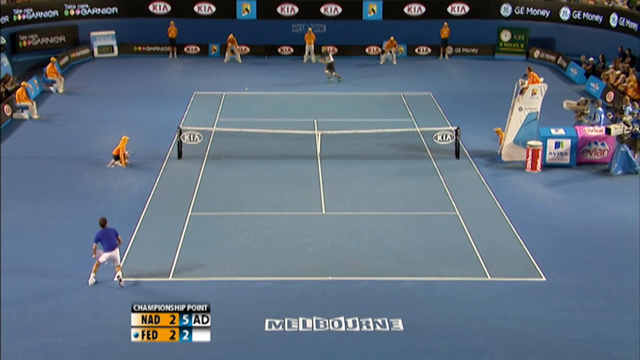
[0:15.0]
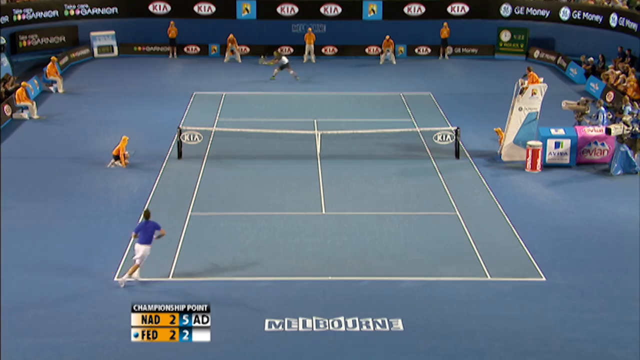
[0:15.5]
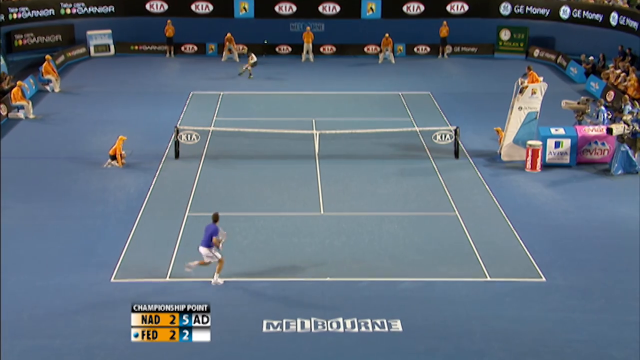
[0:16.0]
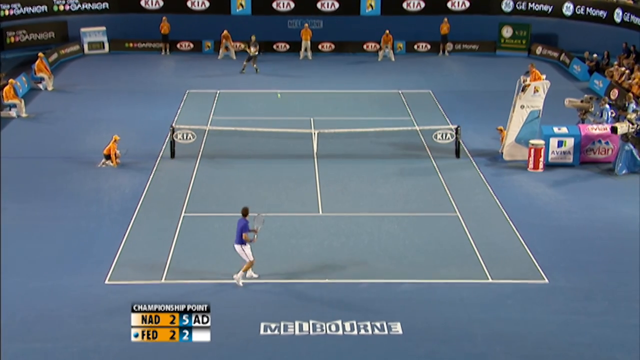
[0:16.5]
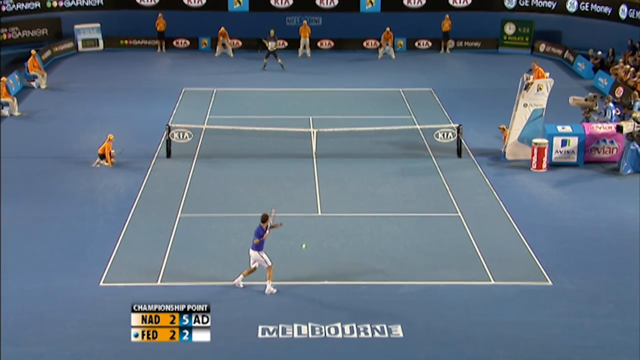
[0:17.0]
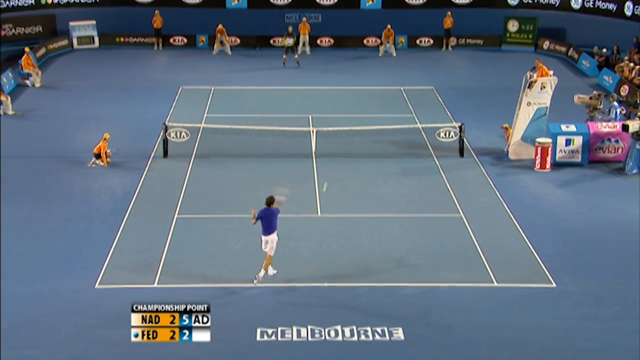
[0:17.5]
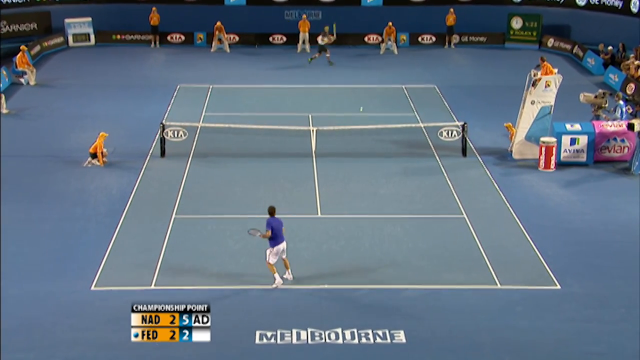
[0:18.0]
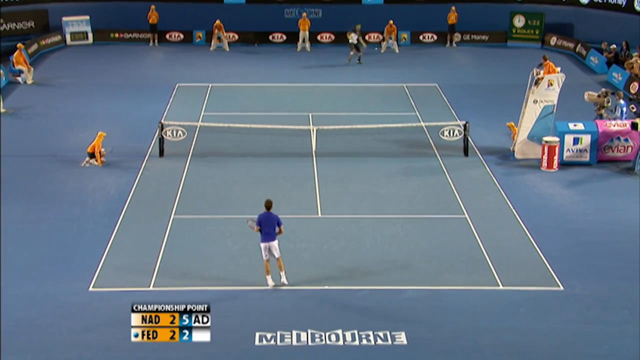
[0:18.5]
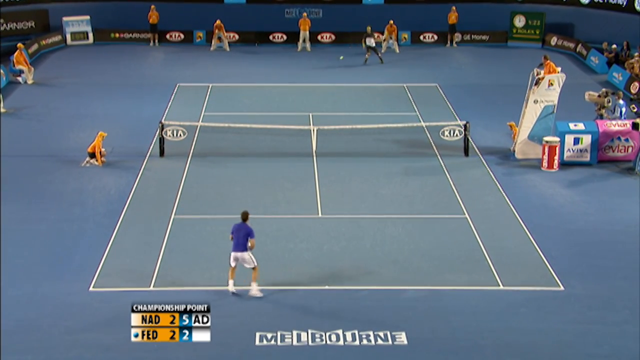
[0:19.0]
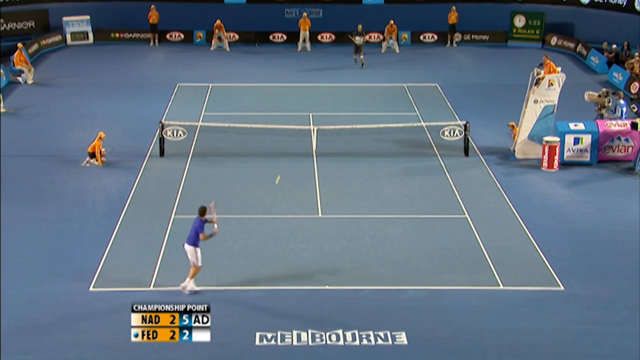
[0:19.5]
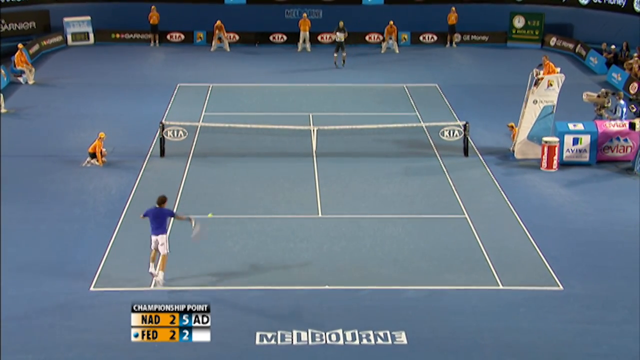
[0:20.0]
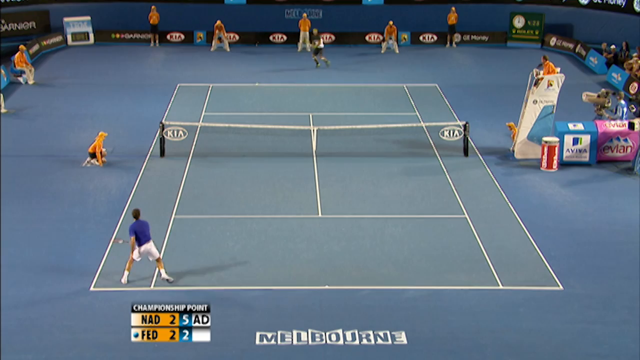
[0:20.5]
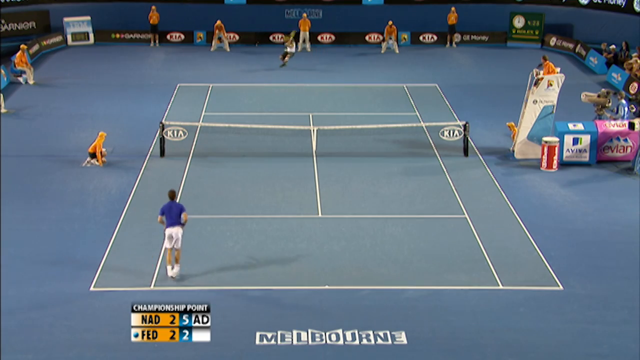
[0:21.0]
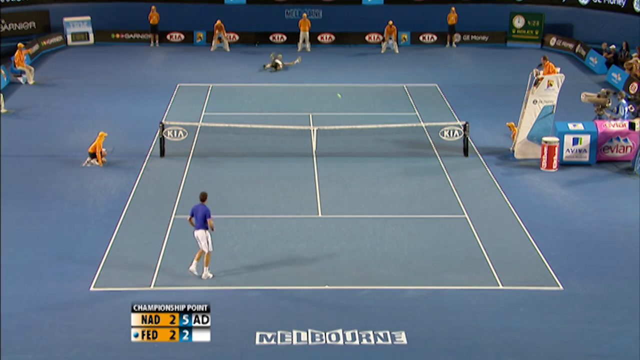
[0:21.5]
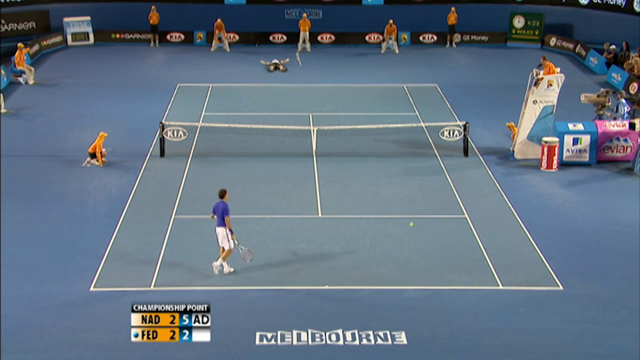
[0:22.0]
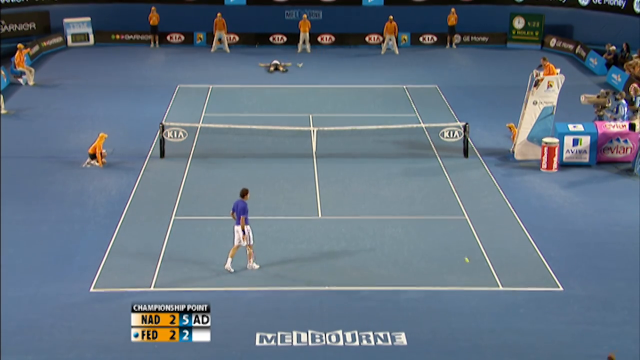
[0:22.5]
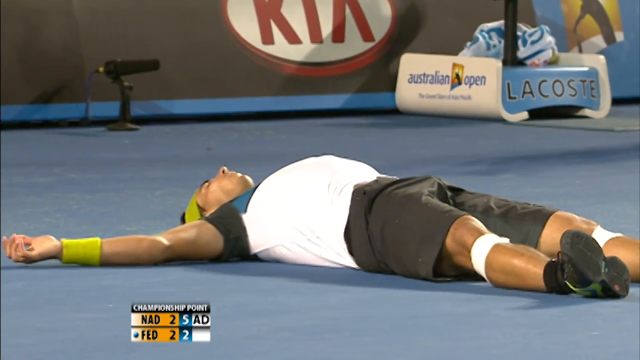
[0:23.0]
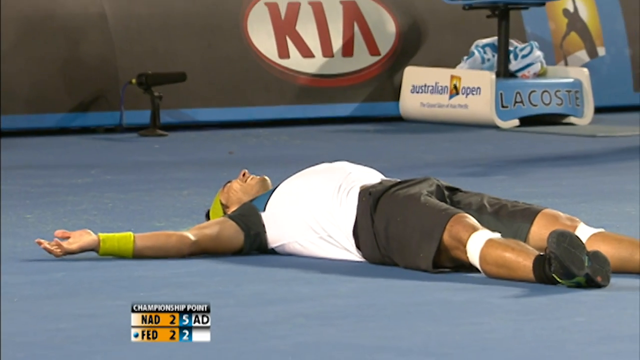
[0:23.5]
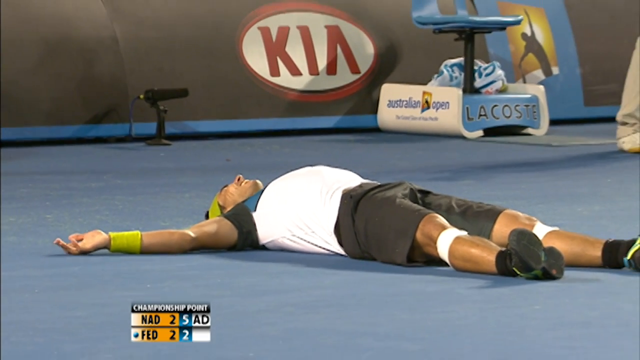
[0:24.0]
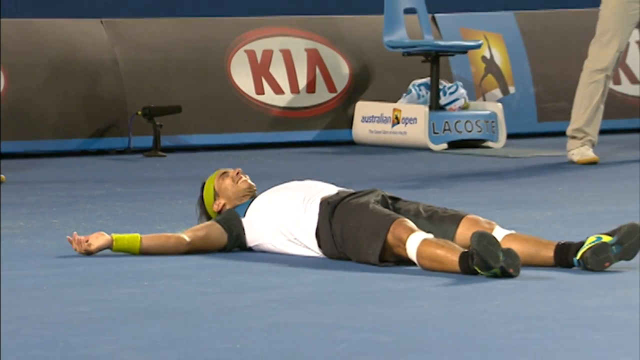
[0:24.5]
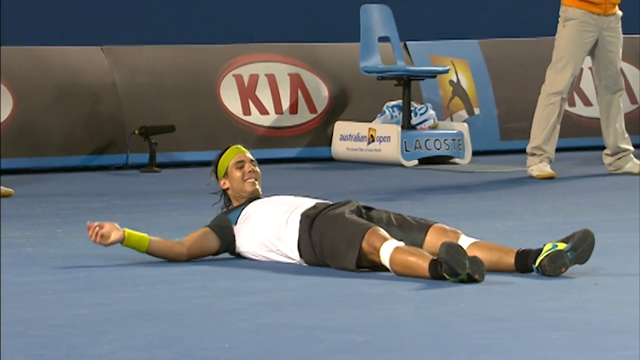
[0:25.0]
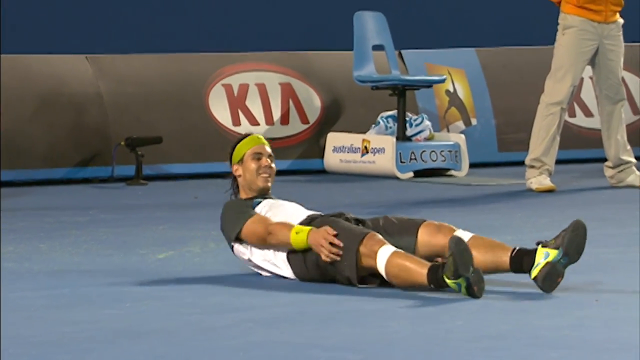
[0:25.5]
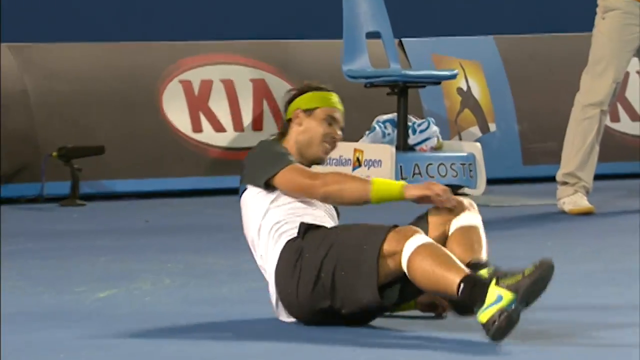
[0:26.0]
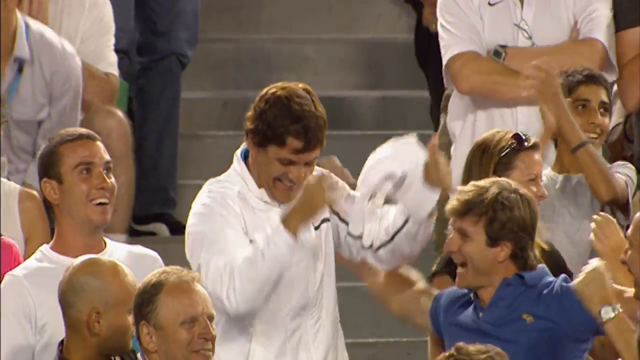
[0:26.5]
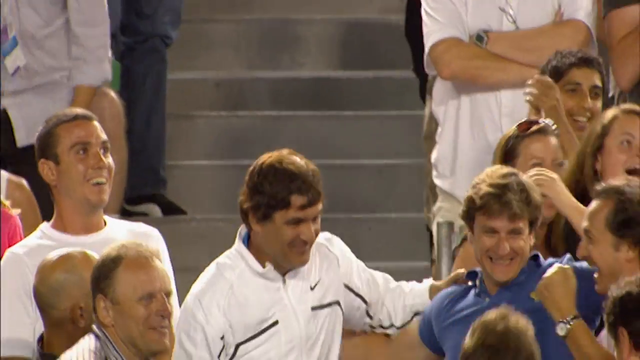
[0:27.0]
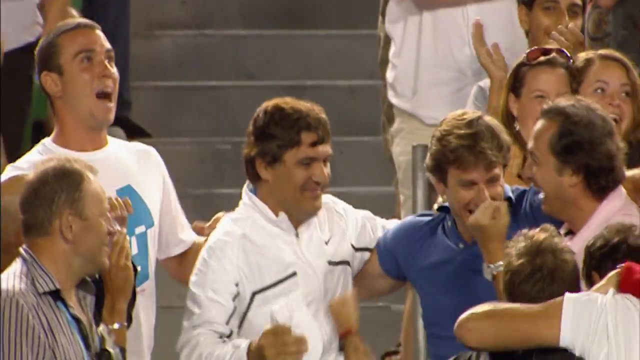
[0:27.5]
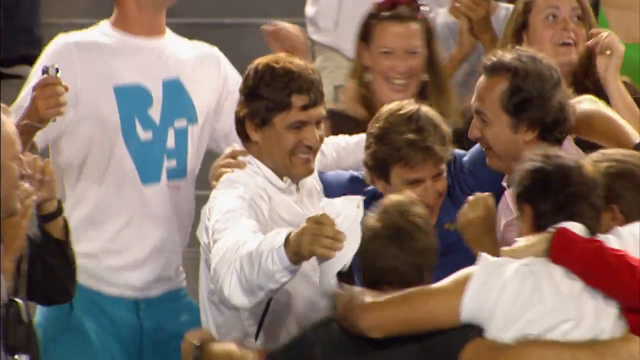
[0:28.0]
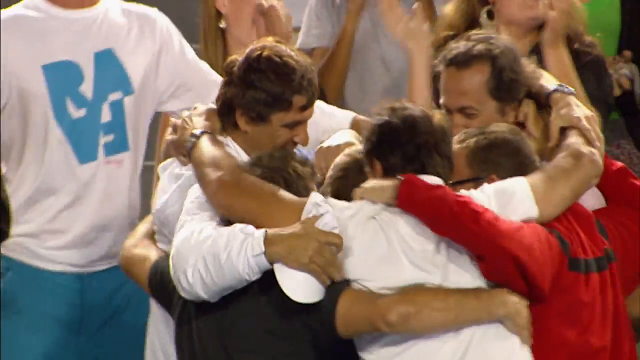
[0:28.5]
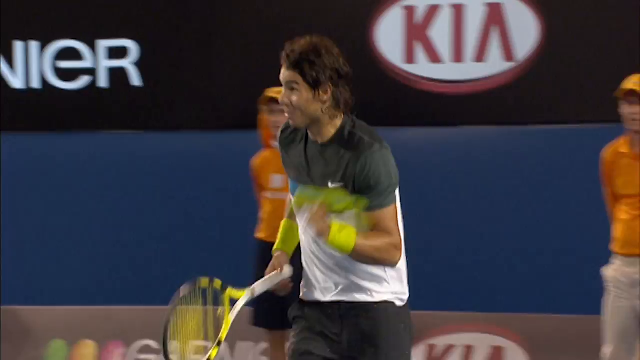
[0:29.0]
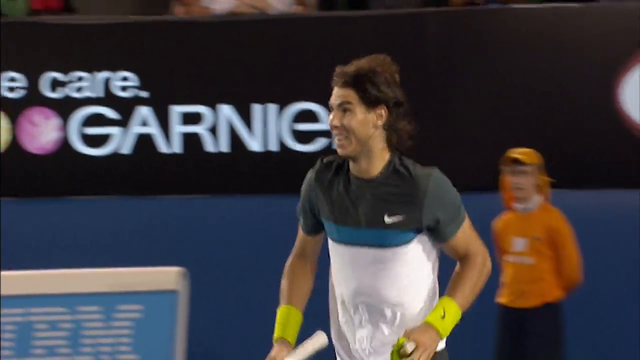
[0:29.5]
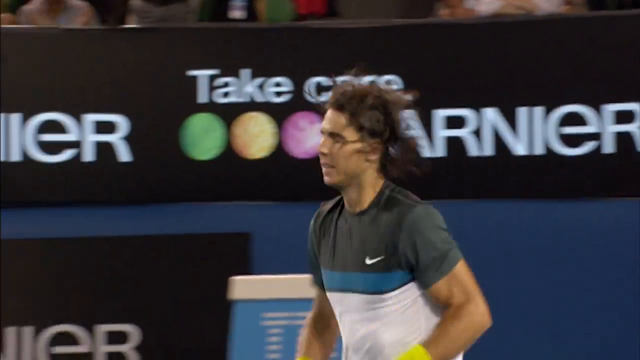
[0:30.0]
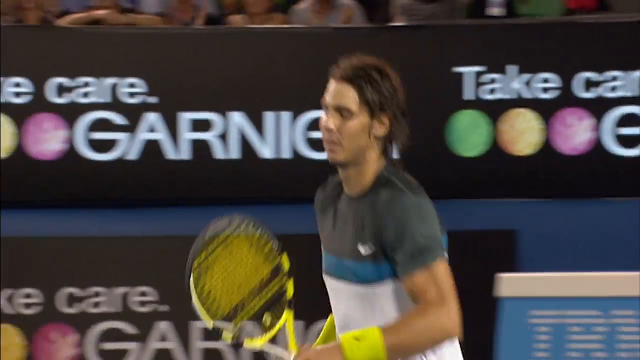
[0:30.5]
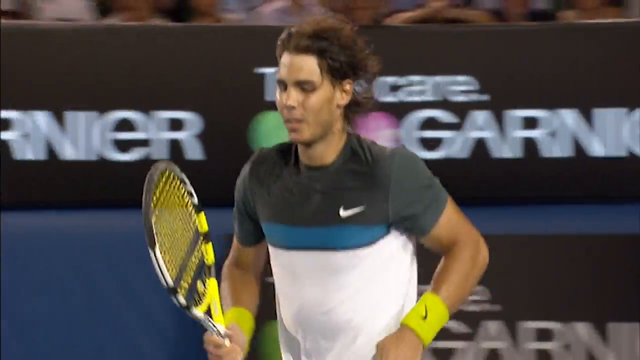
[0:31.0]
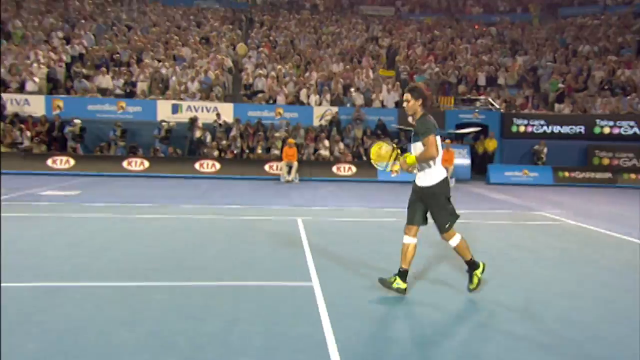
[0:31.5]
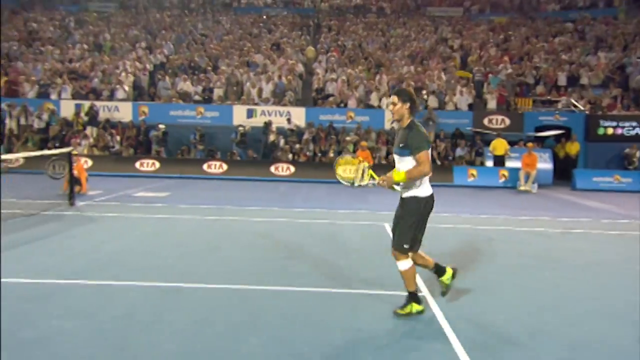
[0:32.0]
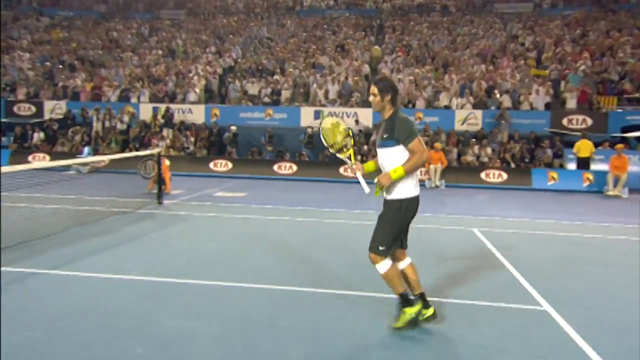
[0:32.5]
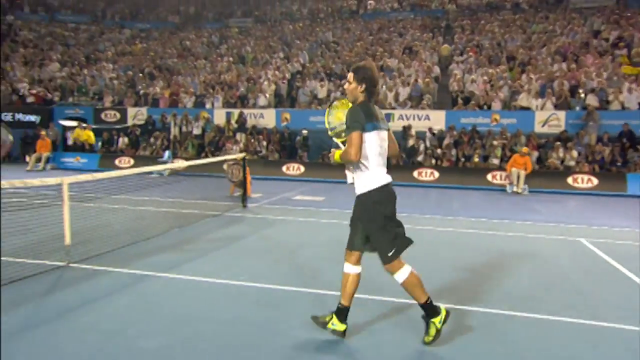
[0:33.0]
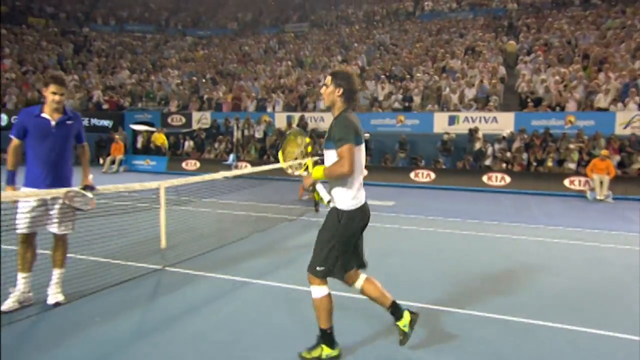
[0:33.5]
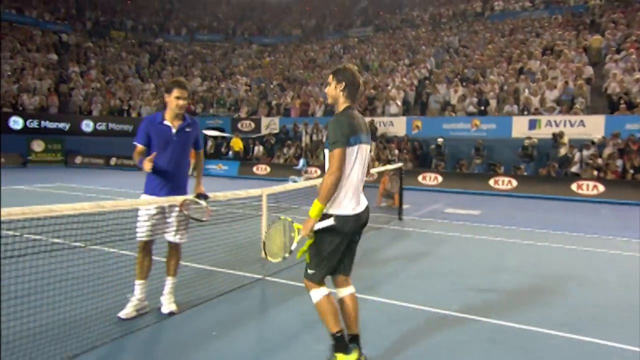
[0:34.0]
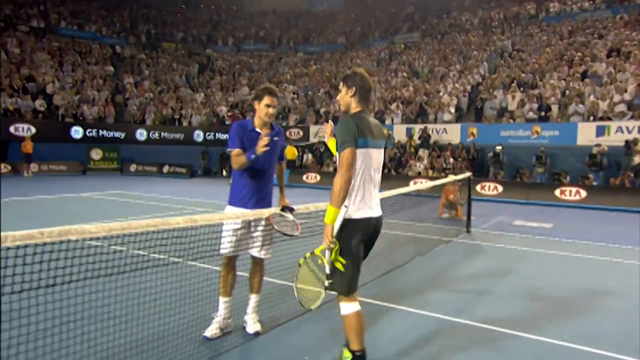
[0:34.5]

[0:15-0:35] The rally continues with the players swinging fiercely, and the player on the bottom faces a bit of a challenge. The player on the top scores a point while falling down, ending up lying flat on his back. The point lands on the far right side while the player on the bottom is on the far left. The two rush toward one another in the center and shake hands. The fans cheer. The players' chair is sponsored by Lacoste, and banners around the event show sponsors including Garnier and G.E. Money. The ball boys wear orange and yellow, and some wear orange and black.